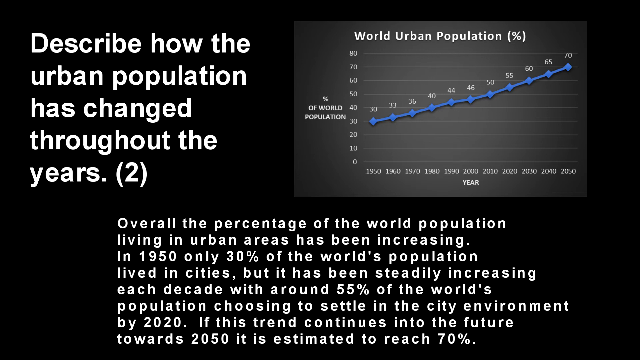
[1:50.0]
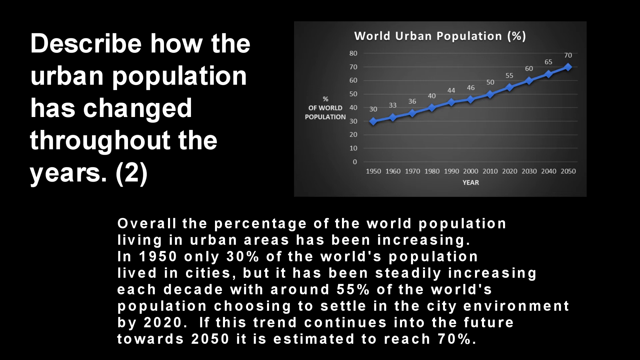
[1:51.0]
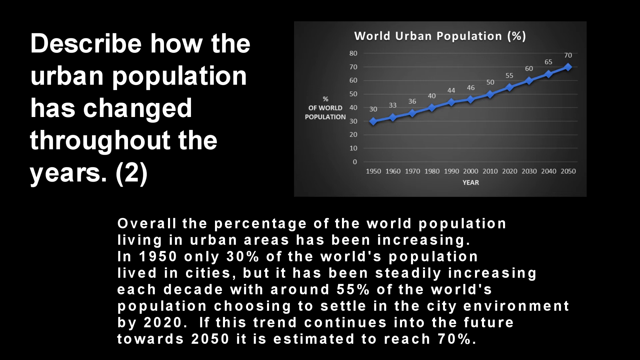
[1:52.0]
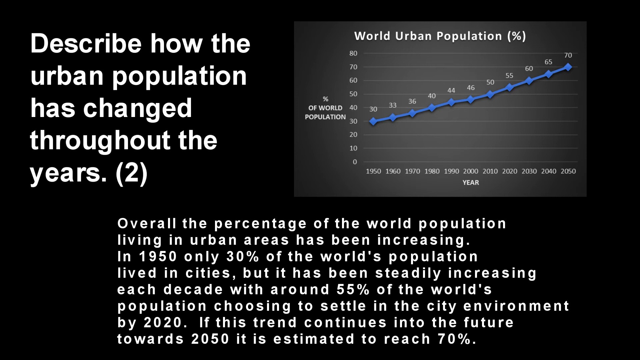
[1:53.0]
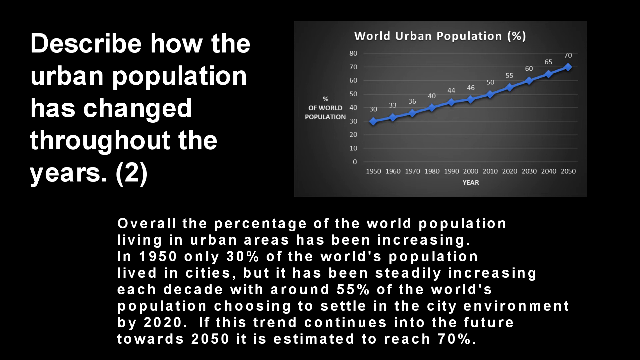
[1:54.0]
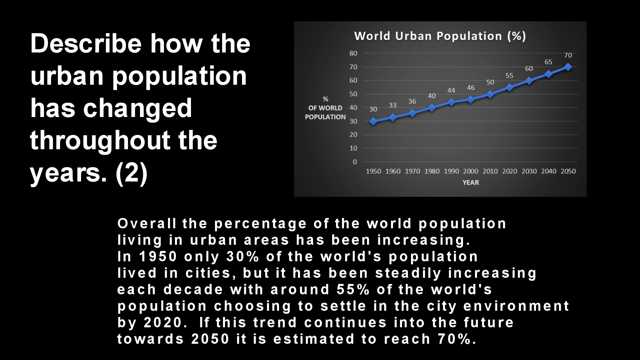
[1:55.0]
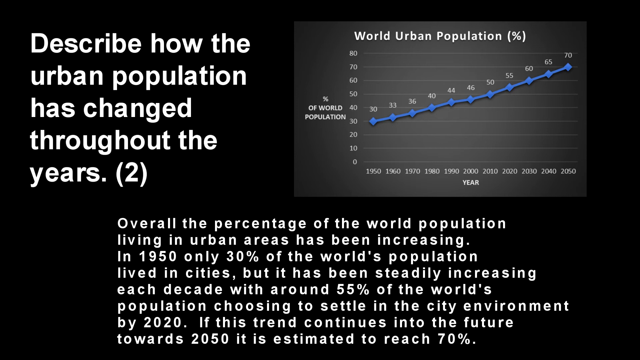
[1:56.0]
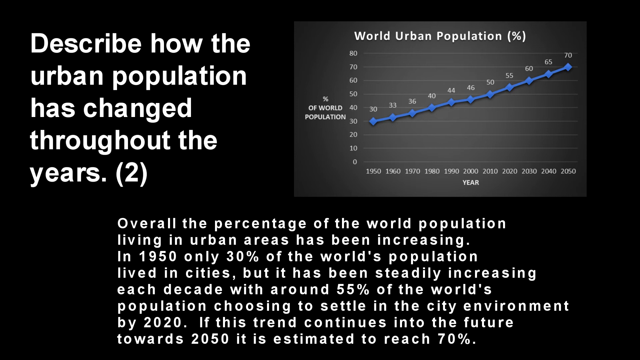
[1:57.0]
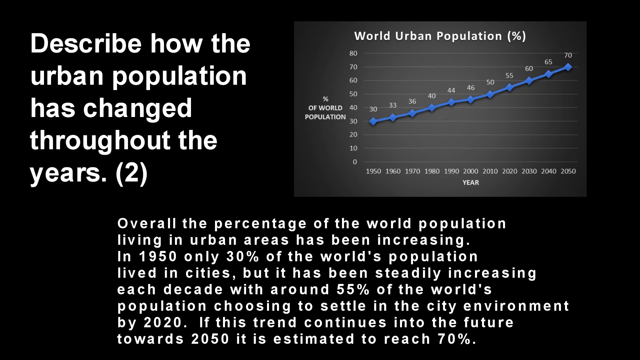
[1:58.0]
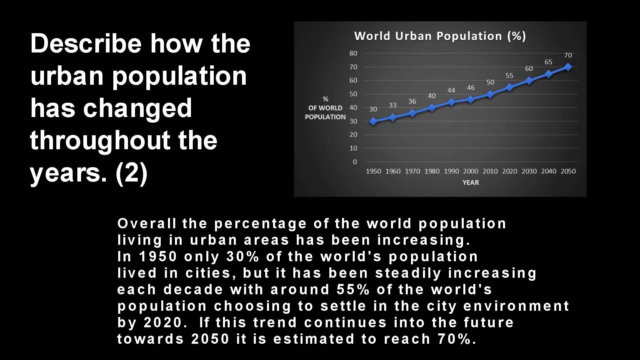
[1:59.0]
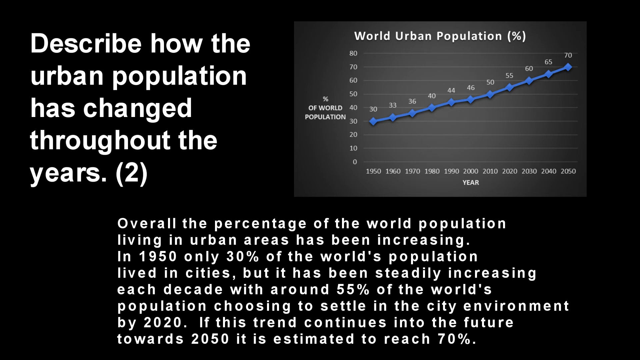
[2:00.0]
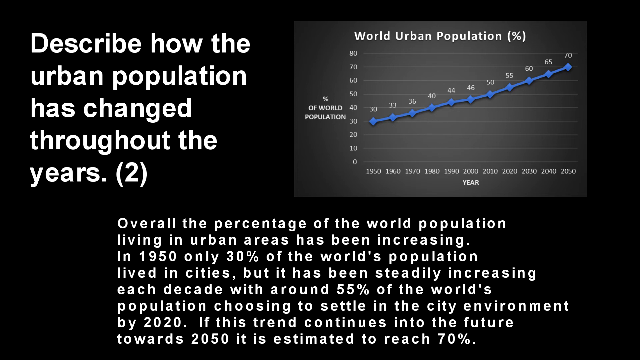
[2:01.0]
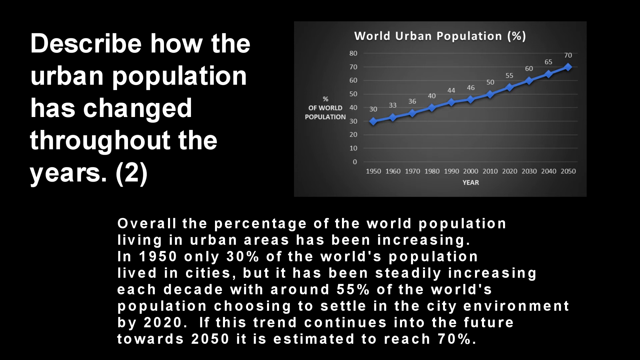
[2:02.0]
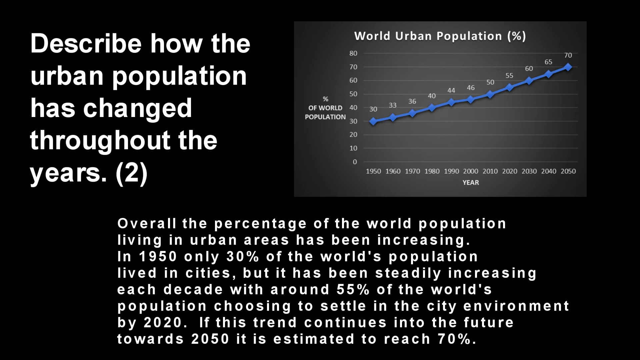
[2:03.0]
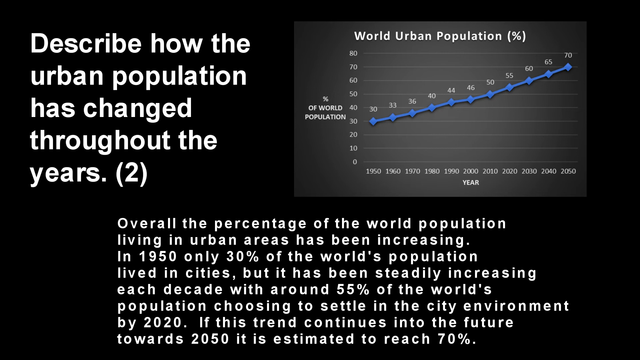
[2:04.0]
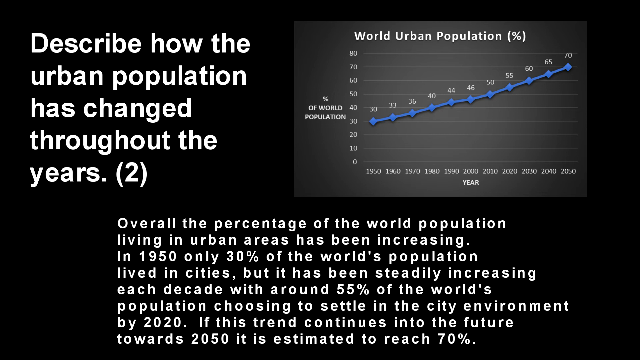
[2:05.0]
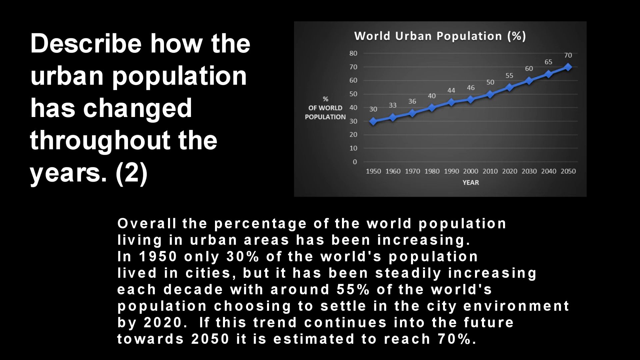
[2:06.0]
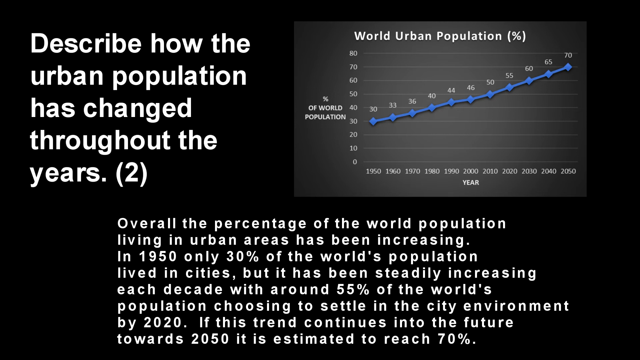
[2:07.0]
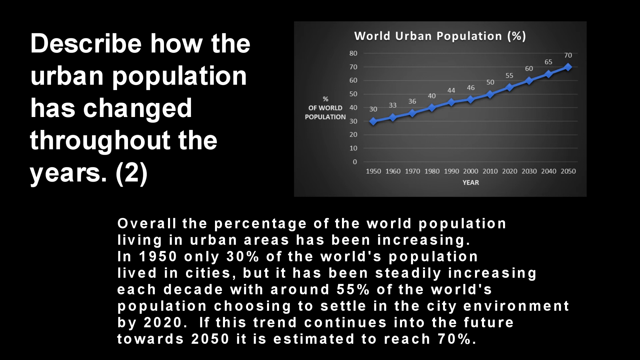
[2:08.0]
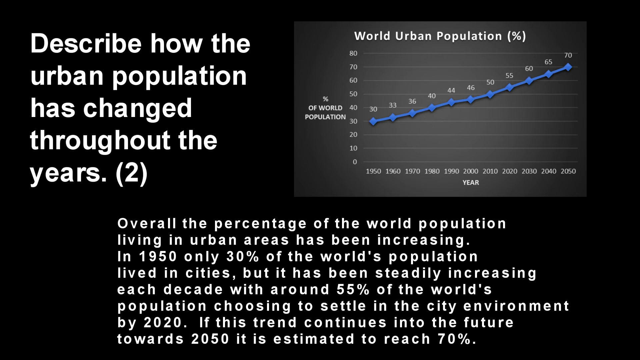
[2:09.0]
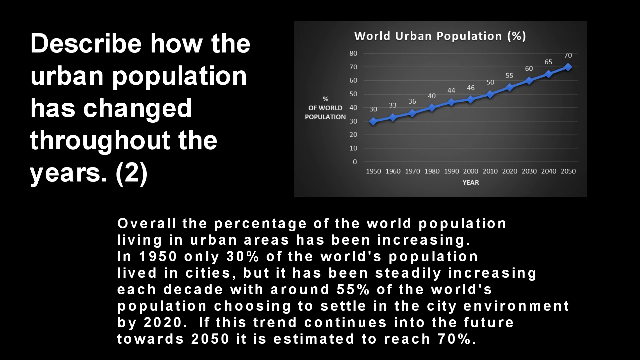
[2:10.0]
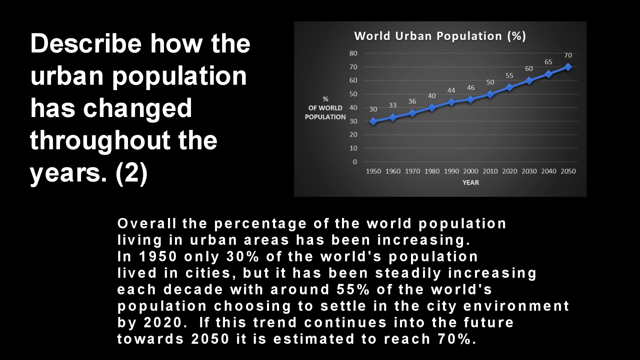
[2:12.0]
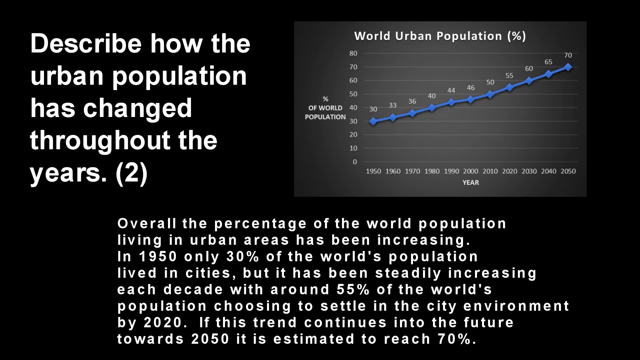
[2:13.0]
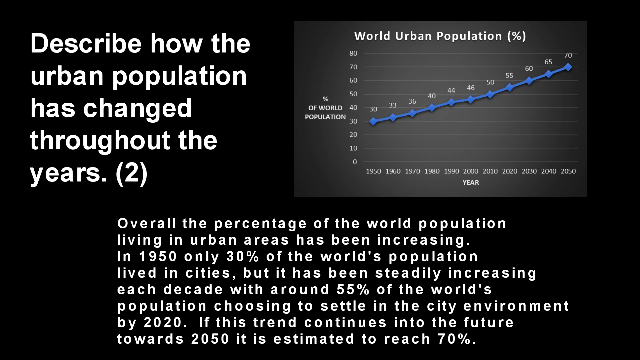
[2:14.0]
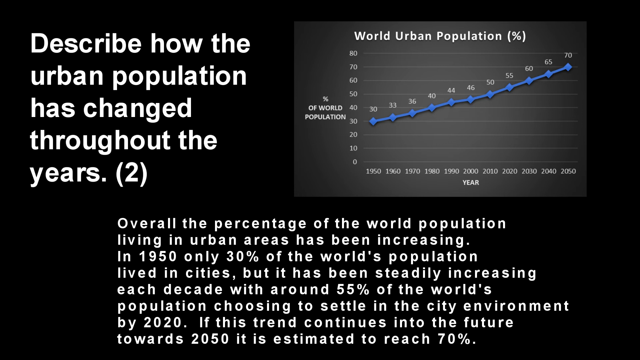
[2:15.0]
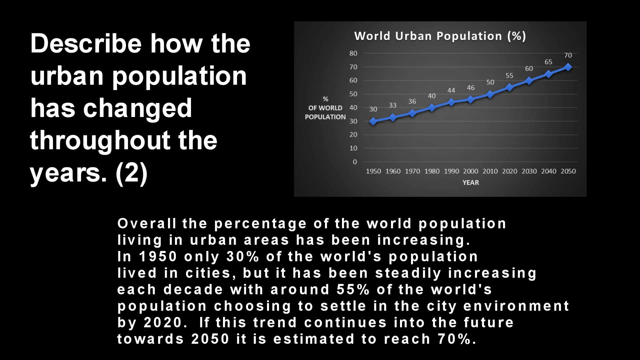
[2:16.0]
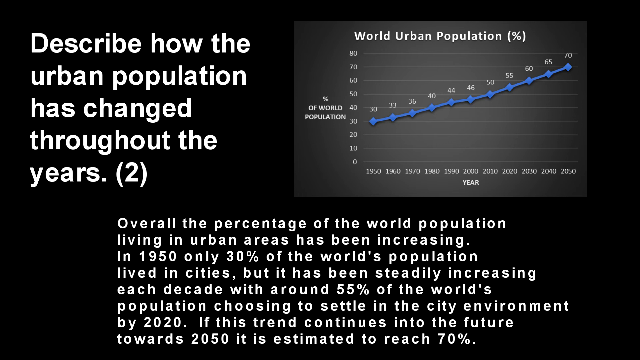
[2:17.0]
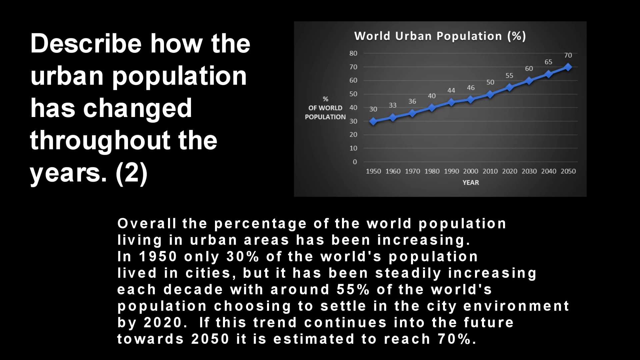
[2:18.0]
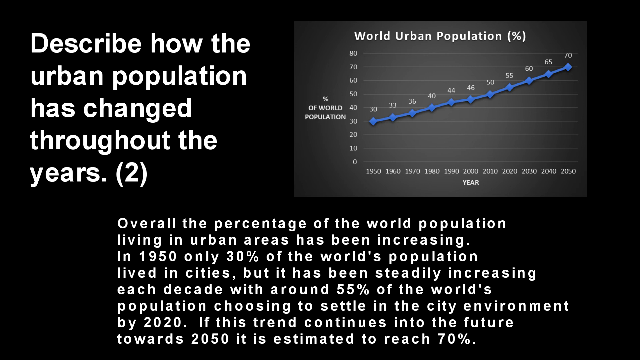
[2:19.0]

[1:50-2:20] The screen keeps showing the prompt to describe how the urban population has changed throughout the years, with the text about 30% in the 1950s and 55% by 2020. The video stays on this screen for a while so it can be read.